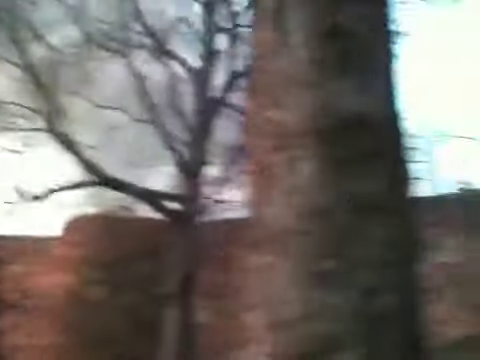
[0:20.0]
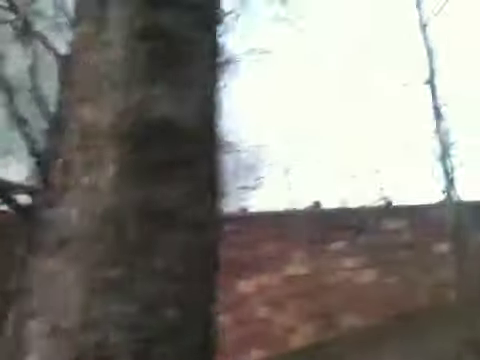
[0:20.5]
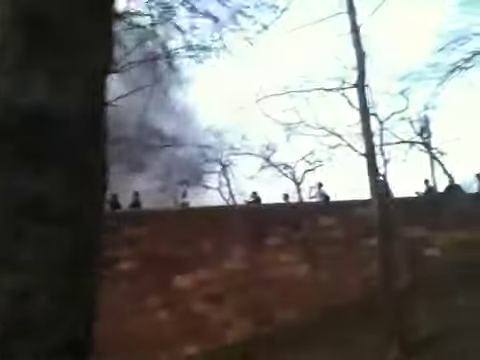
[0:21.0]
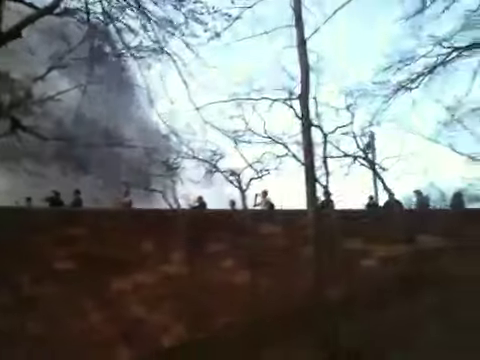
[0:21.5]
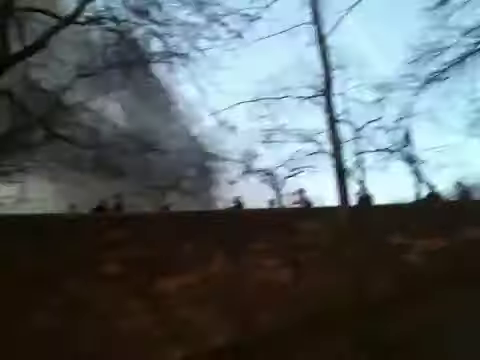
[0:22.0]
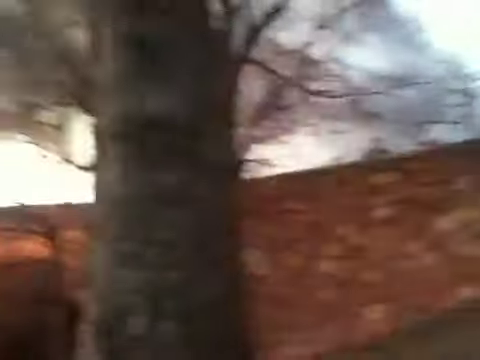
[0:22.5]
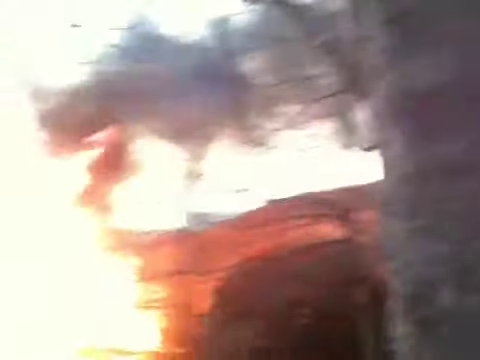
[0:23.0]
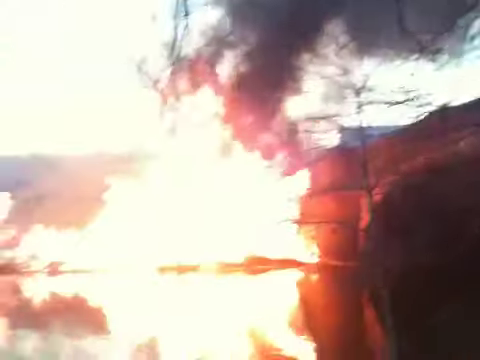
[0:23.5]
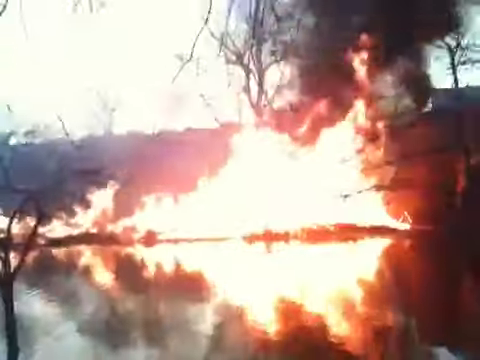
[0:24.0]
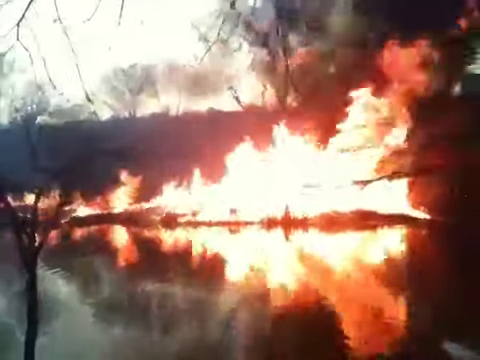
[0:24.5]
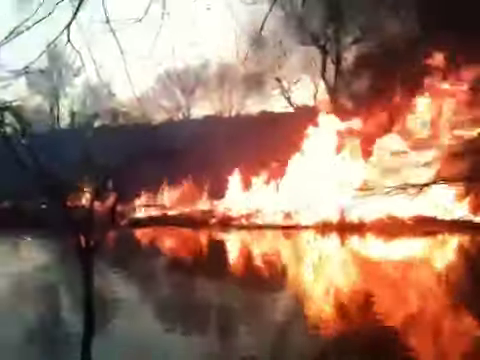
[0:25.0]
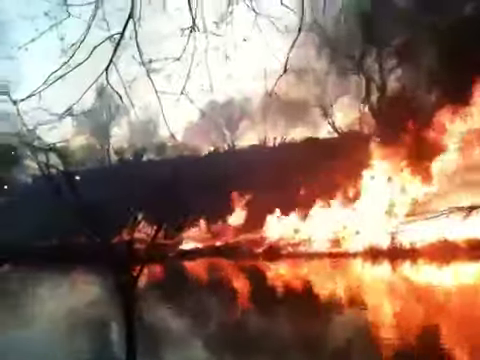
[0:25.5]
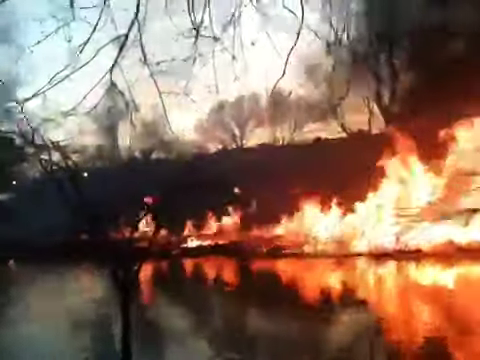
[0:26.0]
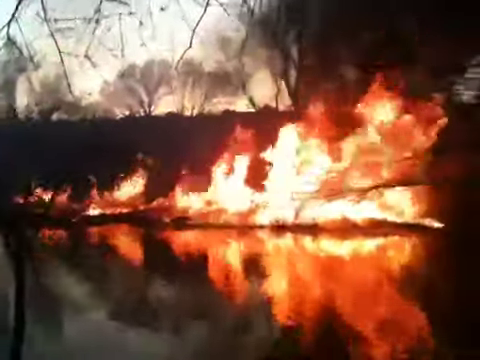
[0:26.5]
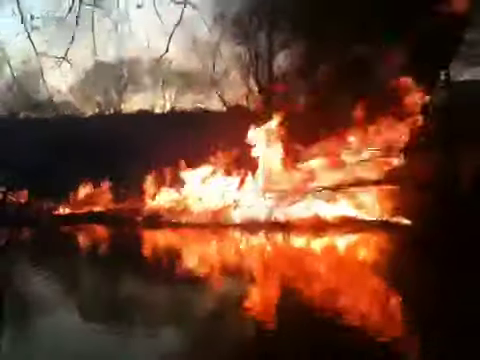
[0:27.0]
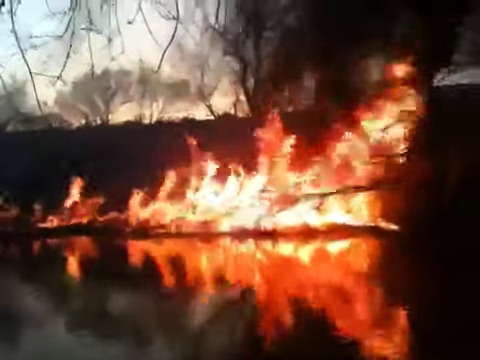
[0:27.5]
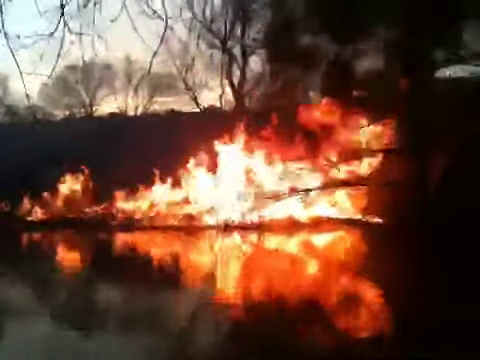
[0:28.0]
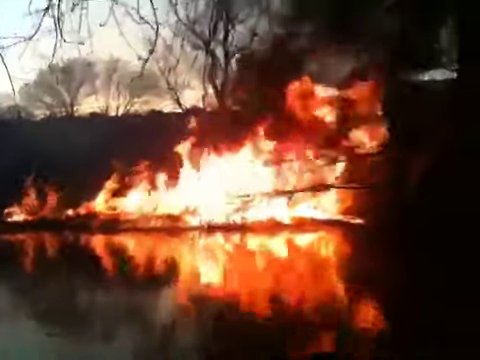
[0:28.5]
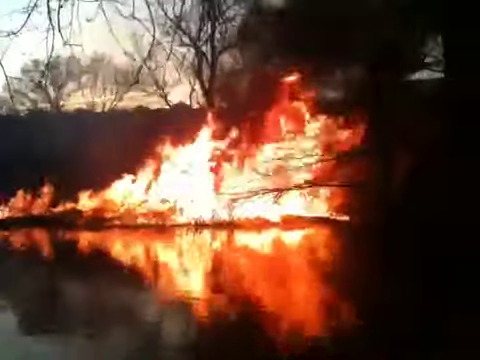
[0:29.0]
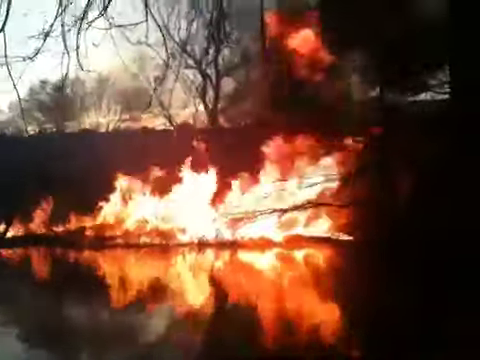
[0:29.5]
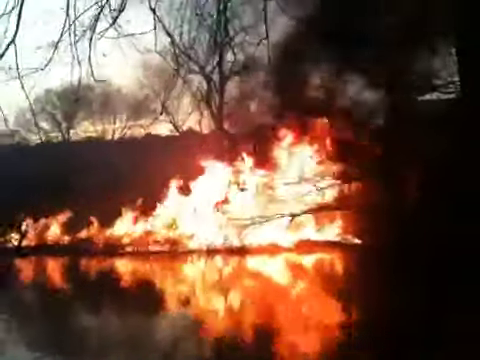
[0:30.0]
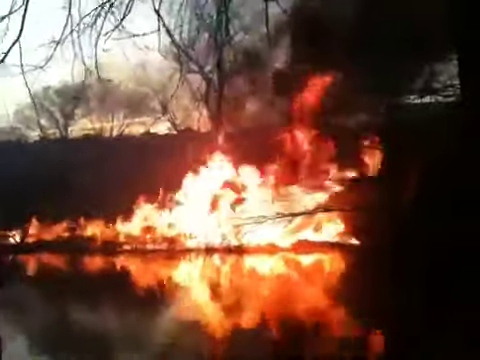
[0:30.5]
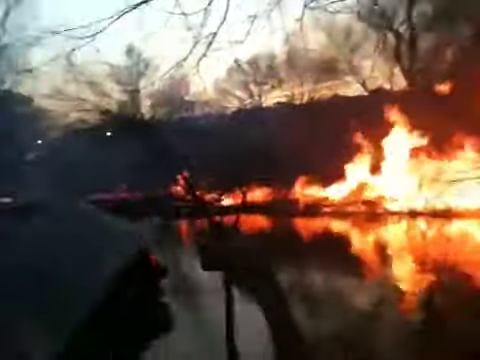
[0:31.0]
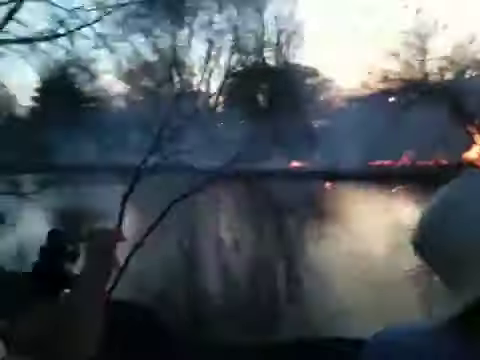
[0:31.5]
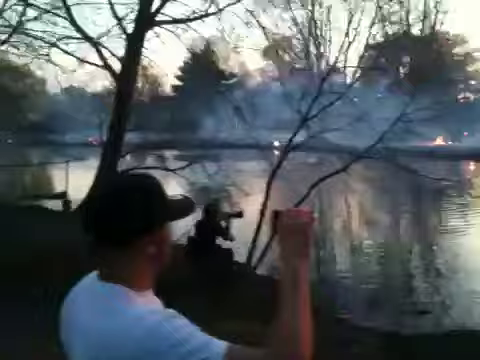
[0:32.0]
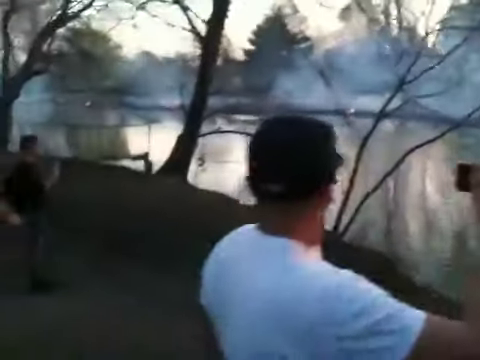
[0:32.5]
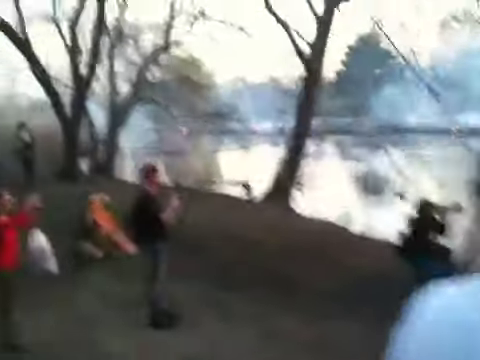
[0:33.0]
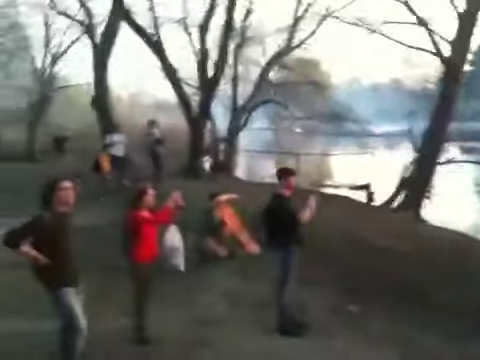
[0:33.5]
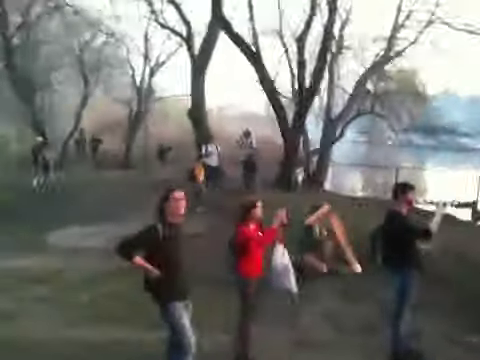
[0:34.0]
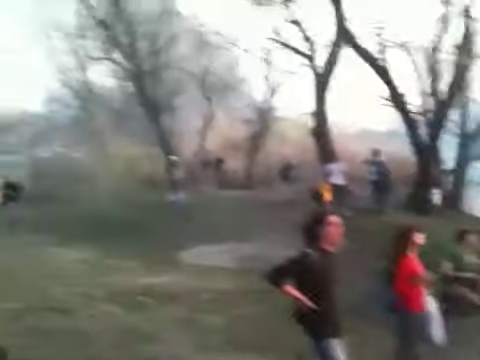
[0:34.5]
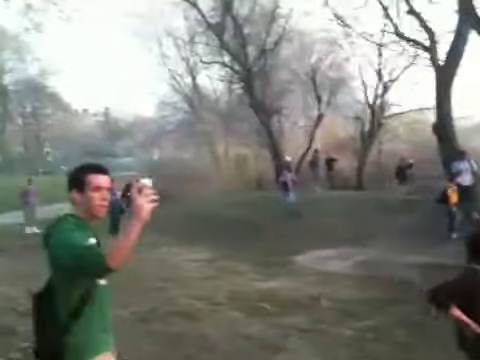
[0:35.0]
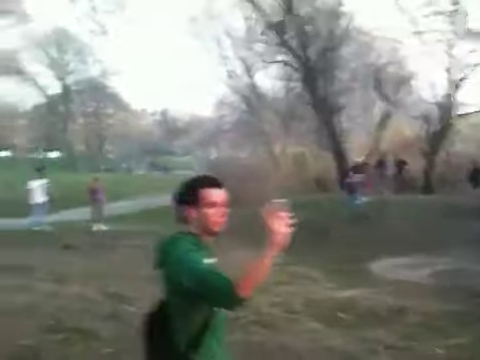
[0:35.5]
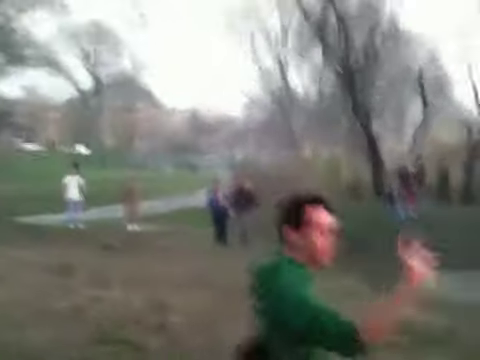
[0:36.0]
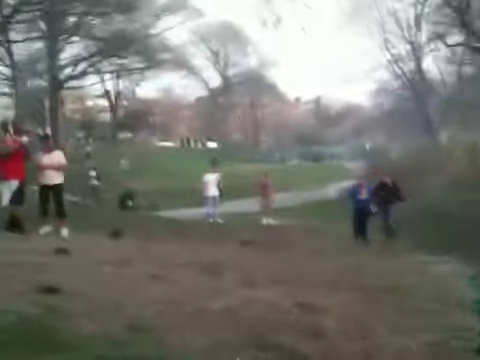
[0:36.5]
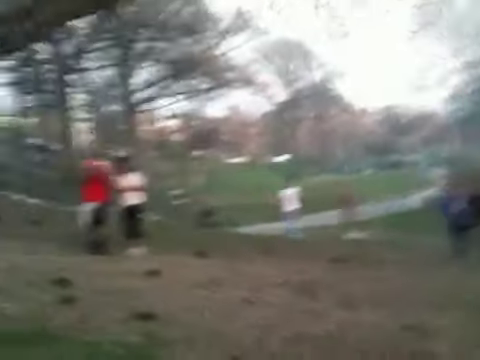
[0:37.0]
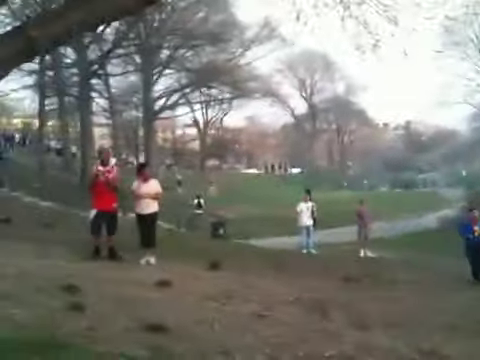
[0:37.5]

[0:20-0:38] Black smoke coming from a fire below fills the air, encompassing the sky, which is gray, suggesting it may be dawn, dusk, or just a rainy day. Looking downward, the camera shows the fire running alongside a river, starting much lower and becoming higher in flame toward the east. The camera pans to the left, showing many people standing on a grassy area with their phones held up, videotaping the fire burning on the opposite side of the river. The people appear to all be Caucasian, of a variety of ages, and dressed for a warmer climate. The camera goes back and forth very shakily between the people and the fire. The person standing closest to the river is a man wearing a baseball cap and a t-shirt, holding an iPhone or cell phone up in the air.